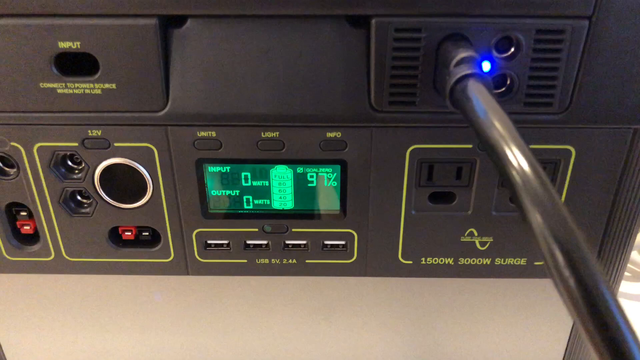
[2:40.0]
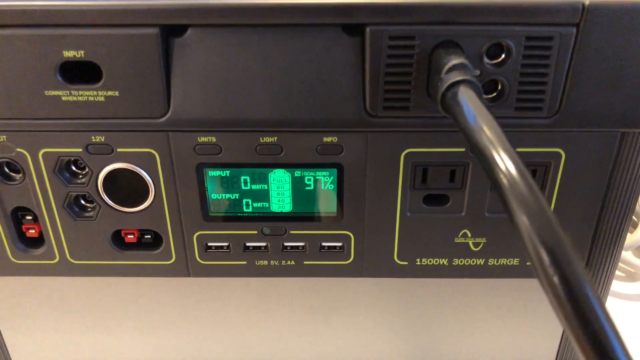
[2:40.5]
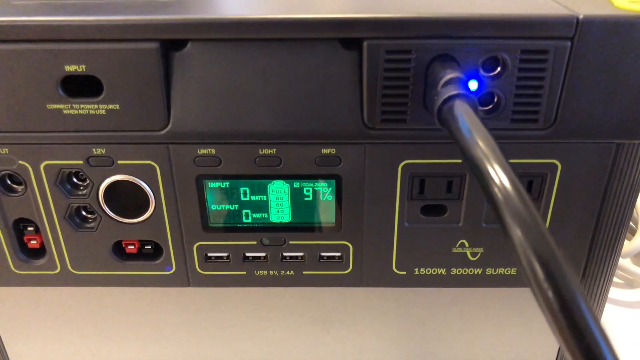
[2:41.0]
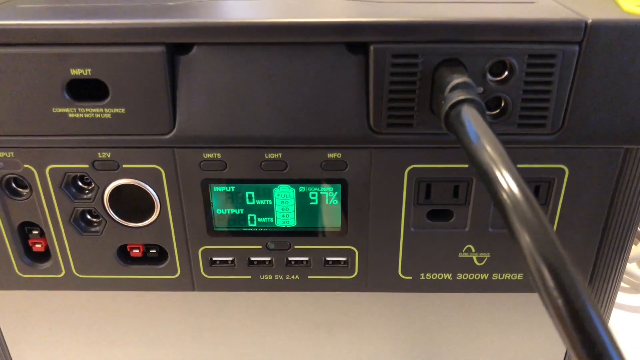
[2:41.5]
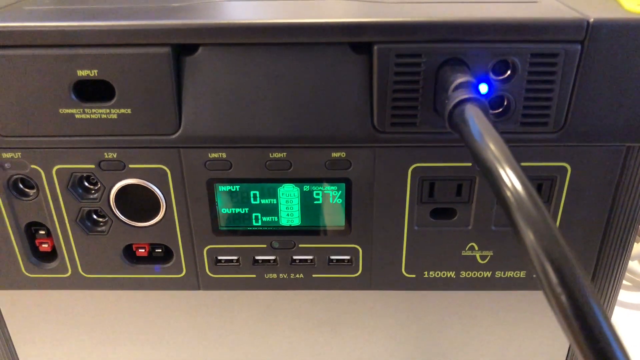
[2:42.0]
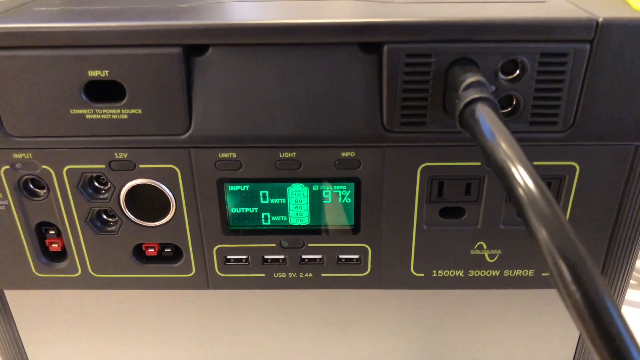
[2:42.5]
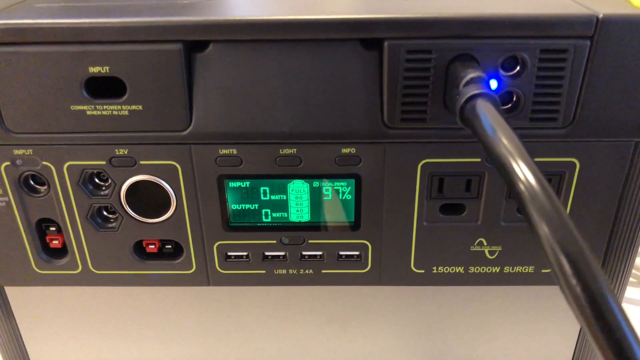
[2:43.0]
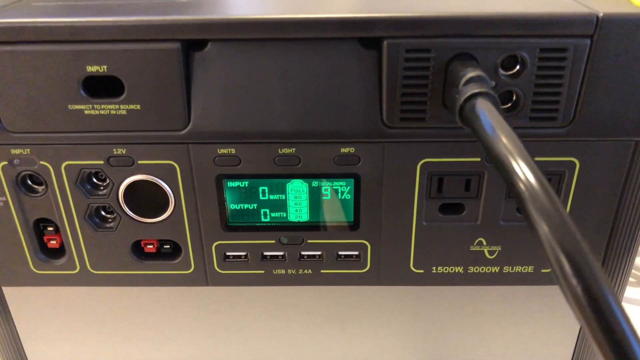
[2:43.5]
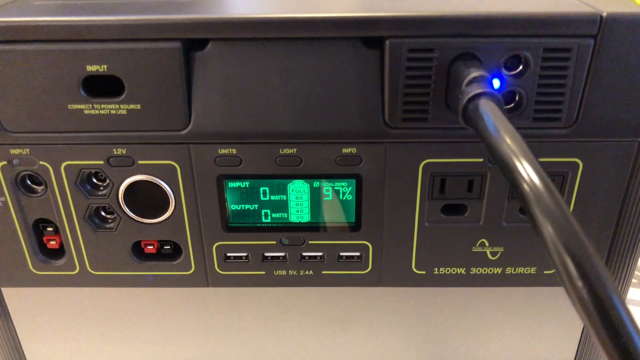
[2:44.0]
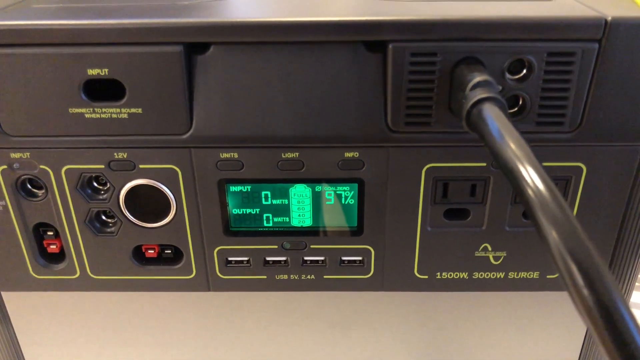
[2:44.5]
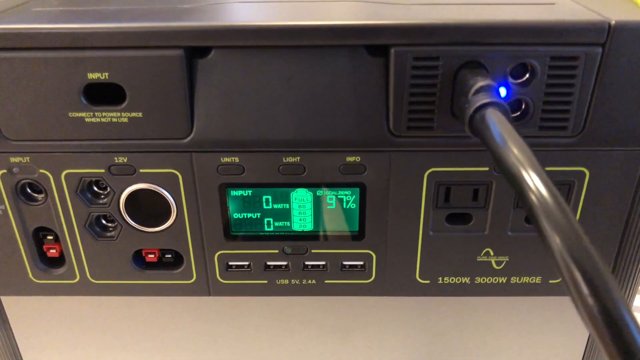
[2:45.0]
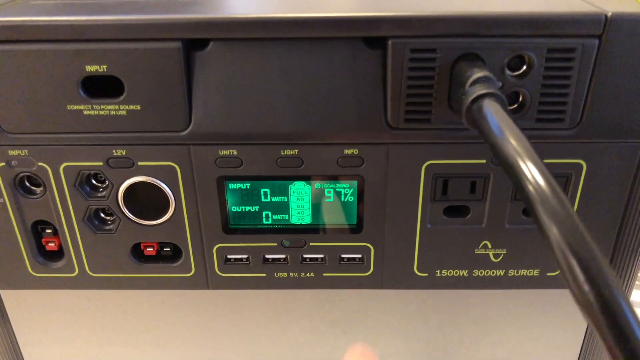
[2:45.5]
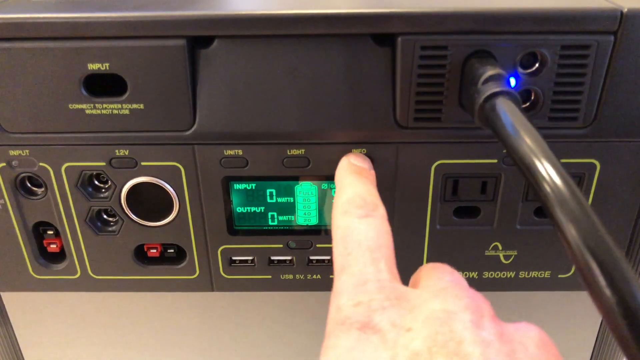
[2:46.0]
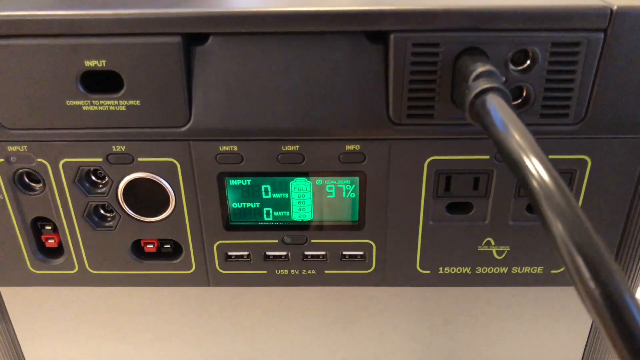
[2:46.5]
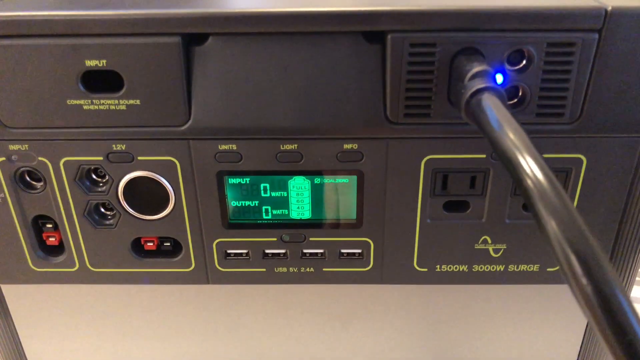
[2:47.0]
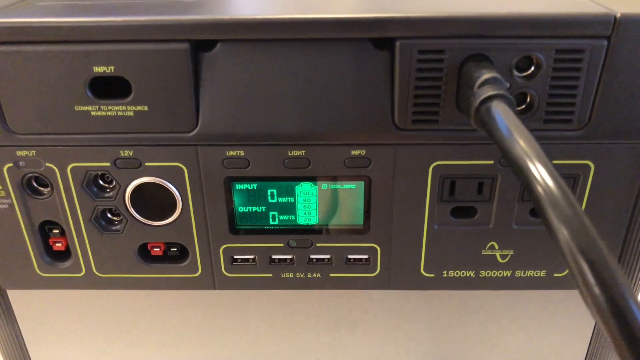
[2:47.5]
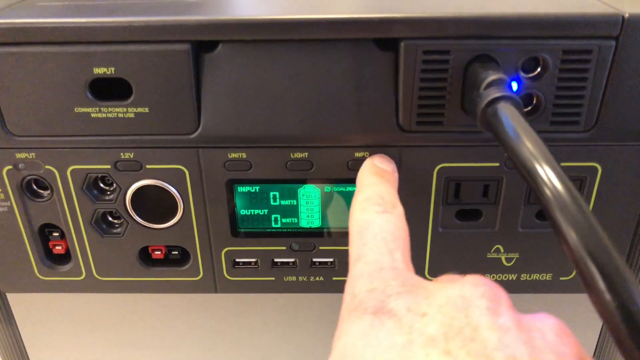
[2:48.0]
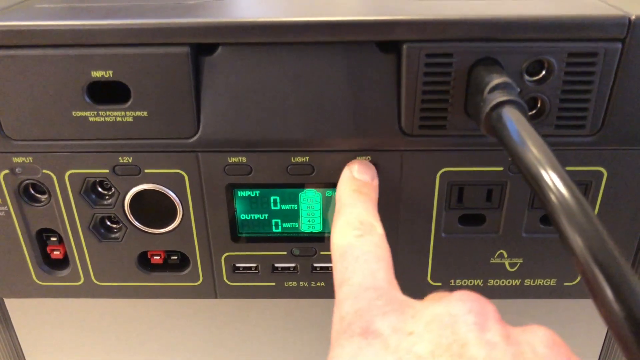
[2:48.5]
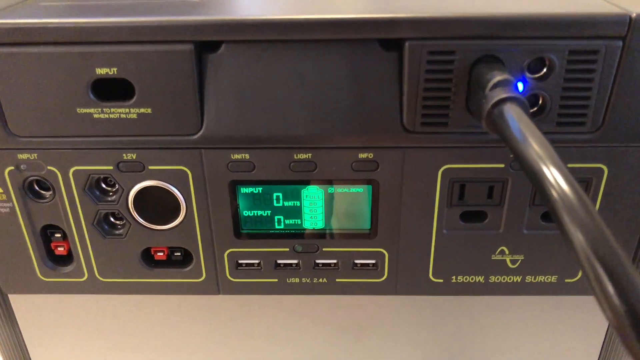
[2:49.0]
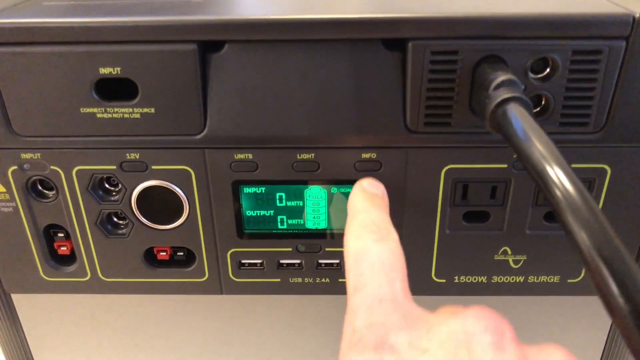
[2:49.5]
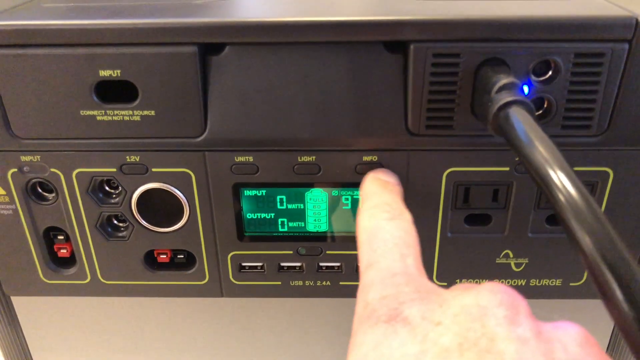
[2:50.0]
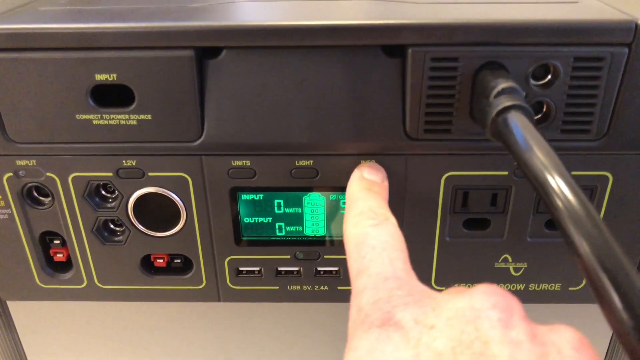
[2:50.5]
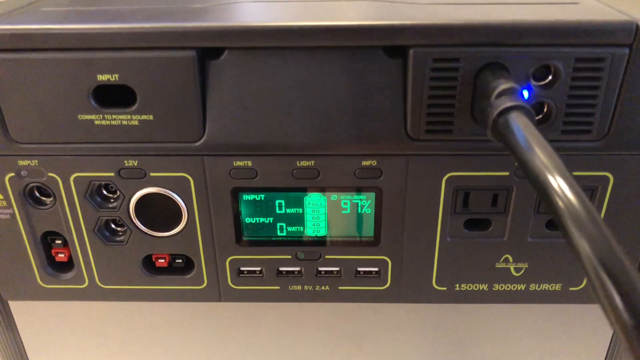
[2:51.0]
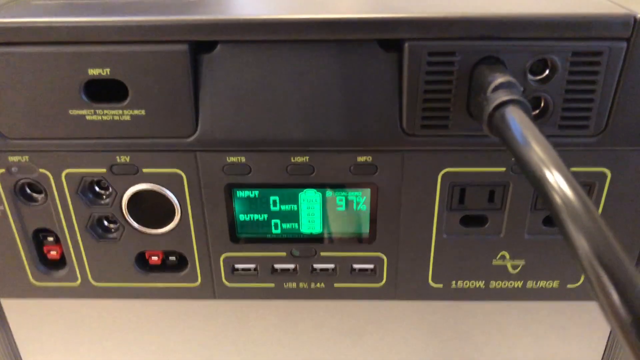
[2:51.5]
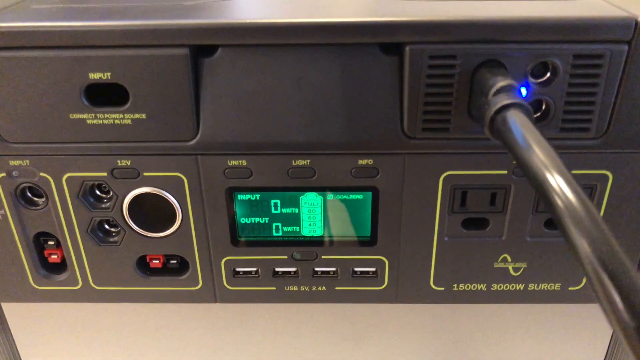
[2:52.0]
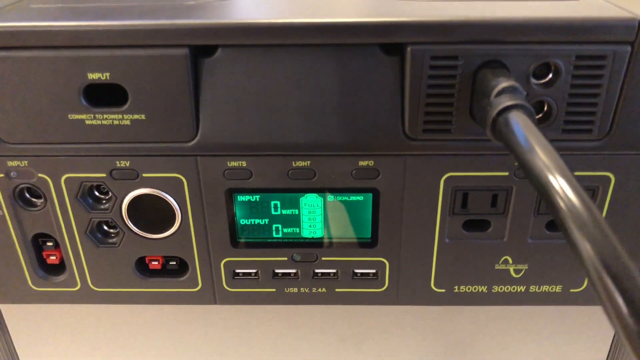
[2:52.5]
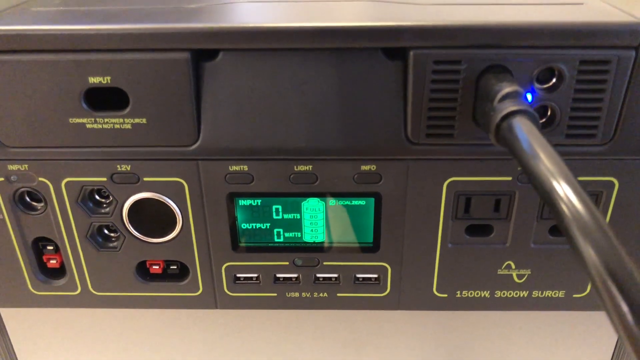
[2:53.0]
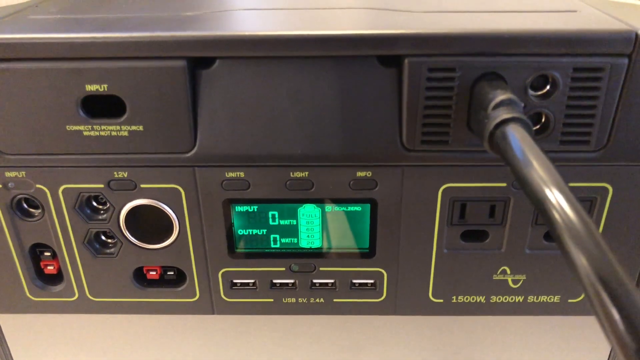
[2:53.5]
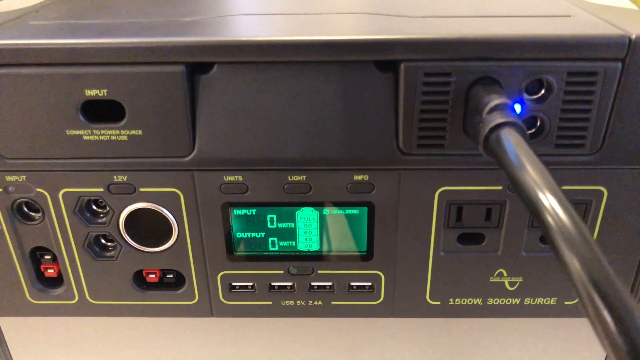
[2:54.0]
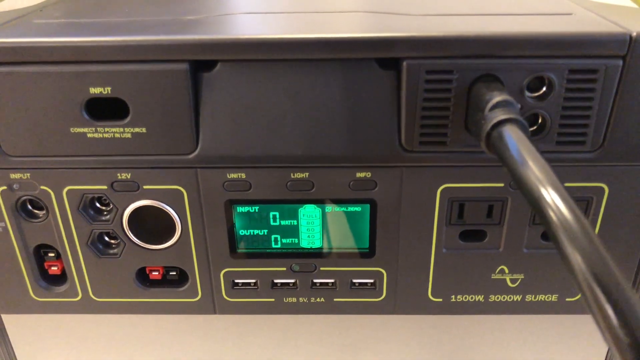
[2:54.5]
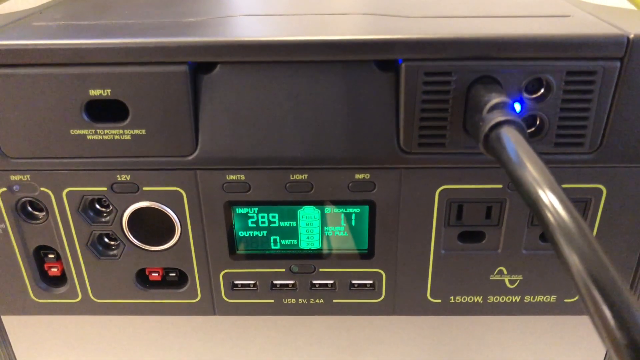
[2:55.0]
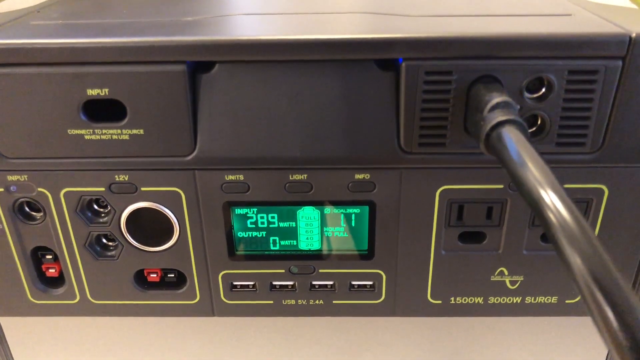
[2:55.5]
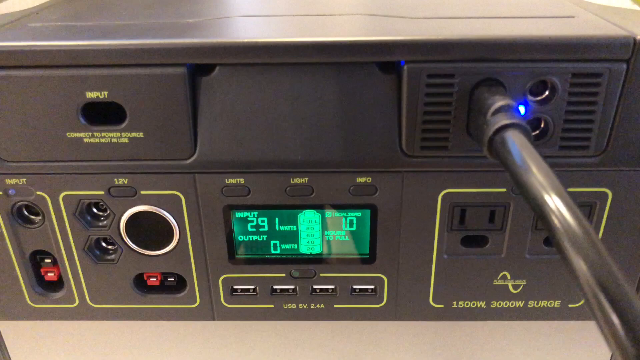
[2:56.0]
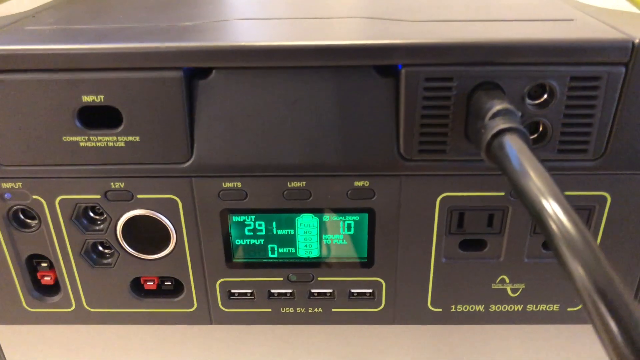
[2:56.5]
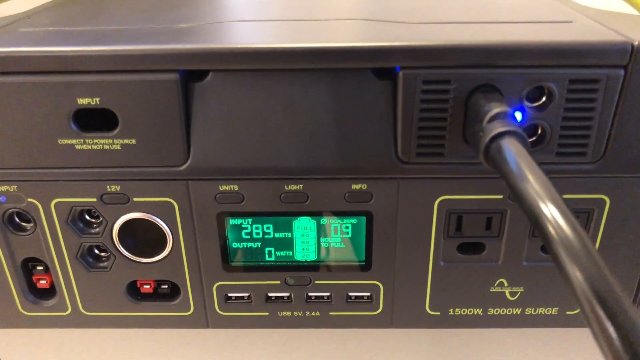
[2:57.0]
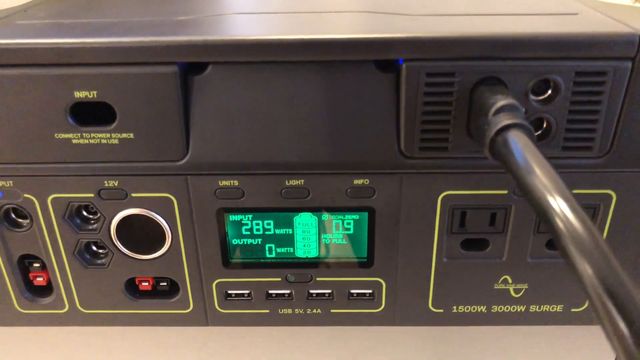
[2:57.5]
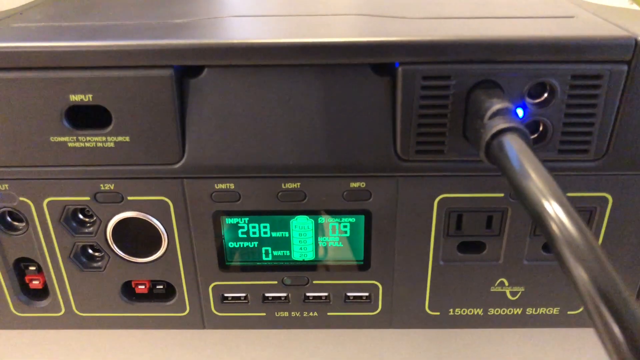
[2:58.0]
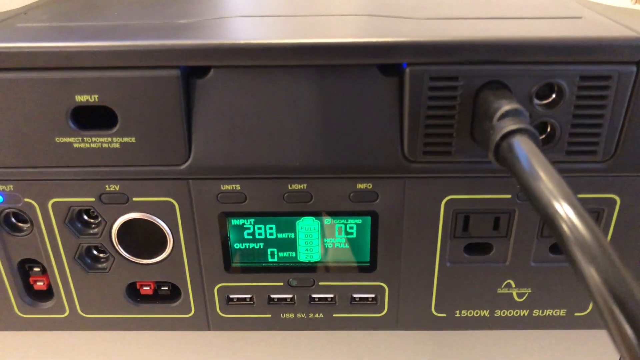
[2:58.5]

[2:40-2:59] The back of a receiver is shown, with a big thick black cord plugged into its upper portion and a blue light blinking. A hand comes in and pushes the light button and the info button, trying to get power back, and there is a green screen. The heaters and receiver are set up on a desk area, possibly in a kitchen, since a KitchenAid blender is in the background. The hand pushes the units and light buttons with the left hand and the info button with the right hand, trying to get the system working. The thick cord is plugged into the back, a blue light illuminates, and the screen becomes live again, though it registers zero. The hand pushes the info button about three times, and the numbers start to increase as the screen comes back.